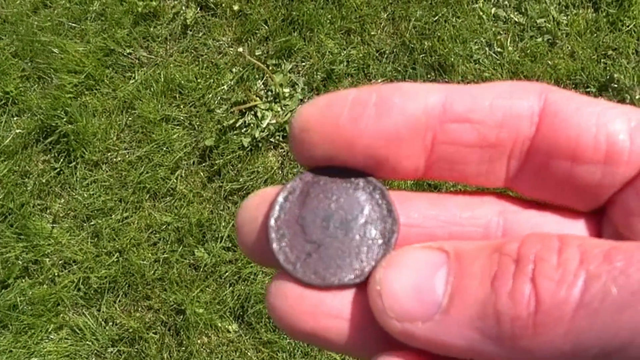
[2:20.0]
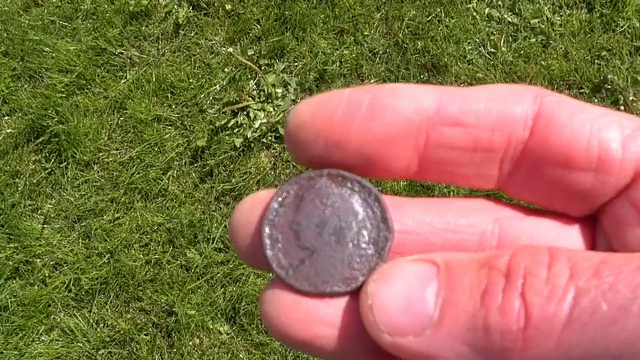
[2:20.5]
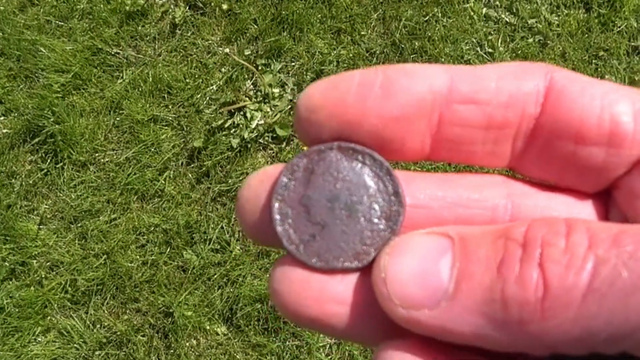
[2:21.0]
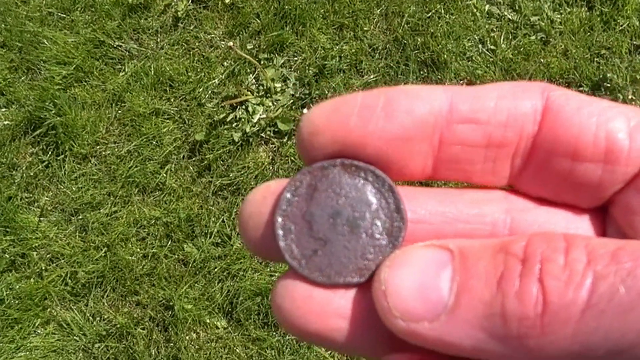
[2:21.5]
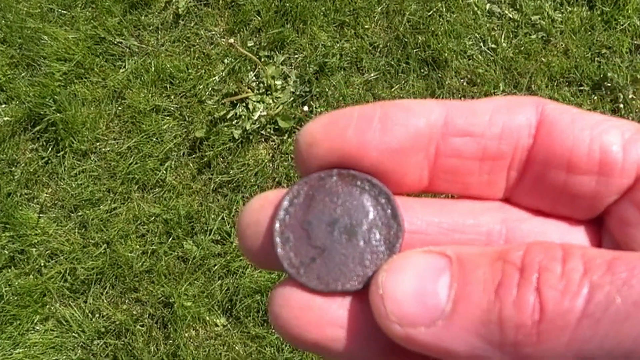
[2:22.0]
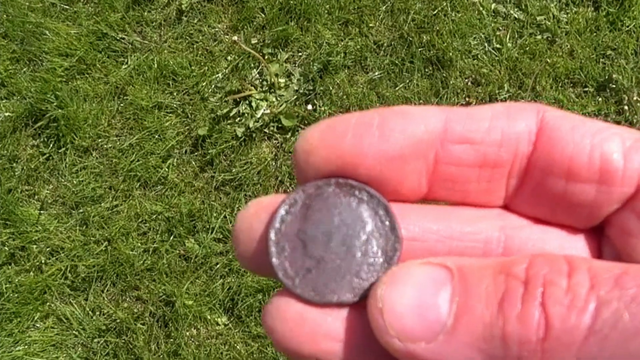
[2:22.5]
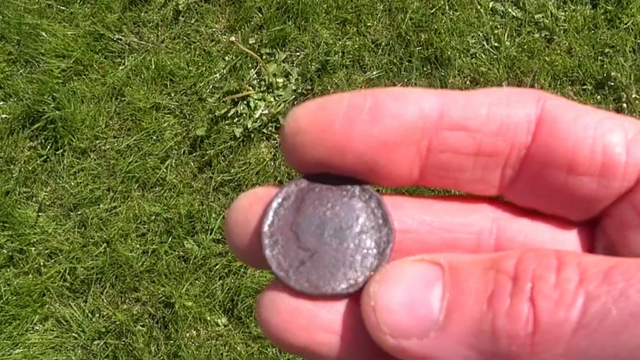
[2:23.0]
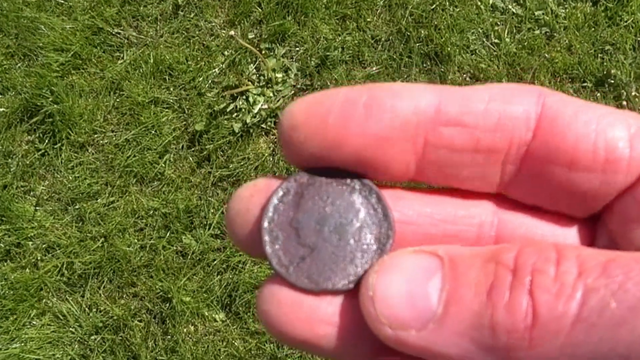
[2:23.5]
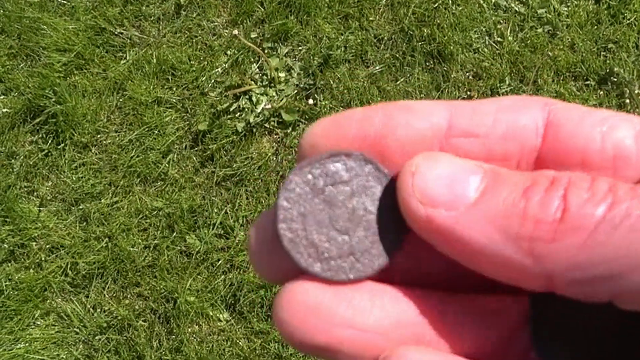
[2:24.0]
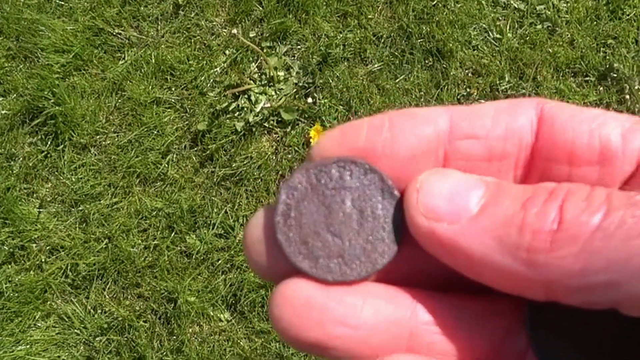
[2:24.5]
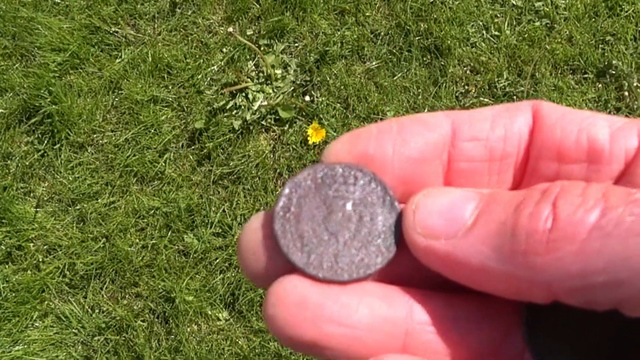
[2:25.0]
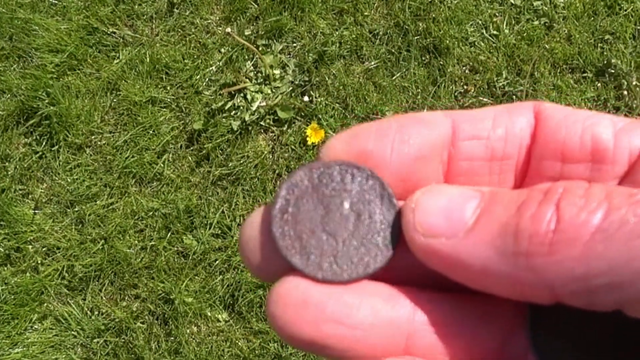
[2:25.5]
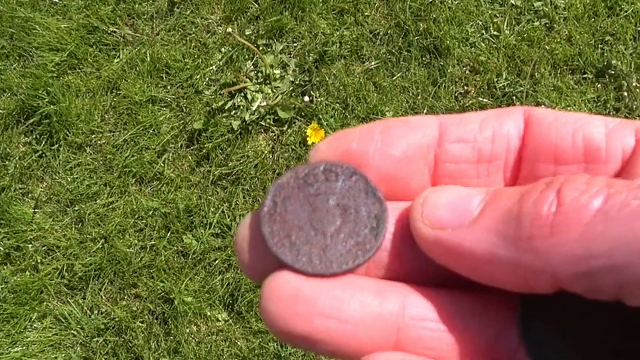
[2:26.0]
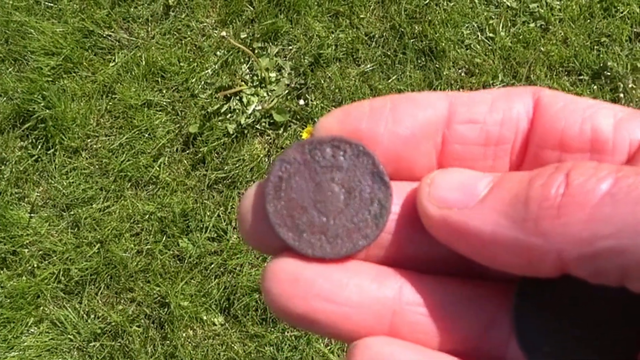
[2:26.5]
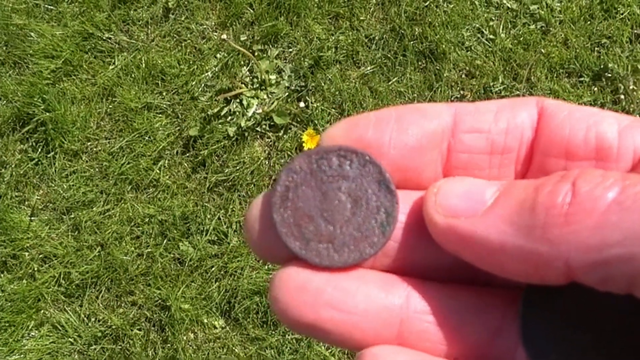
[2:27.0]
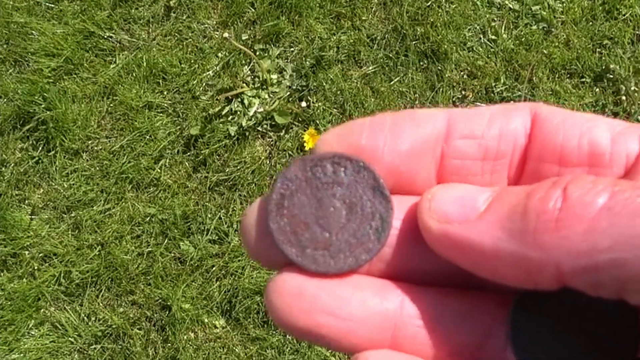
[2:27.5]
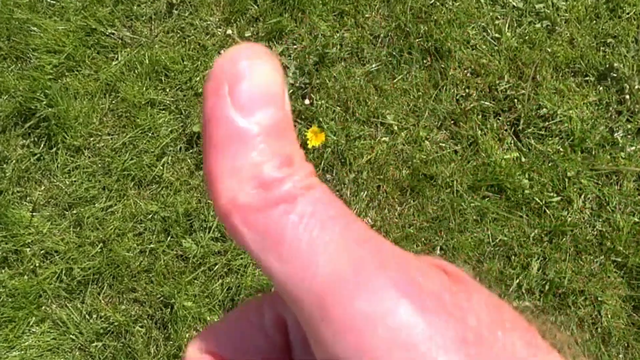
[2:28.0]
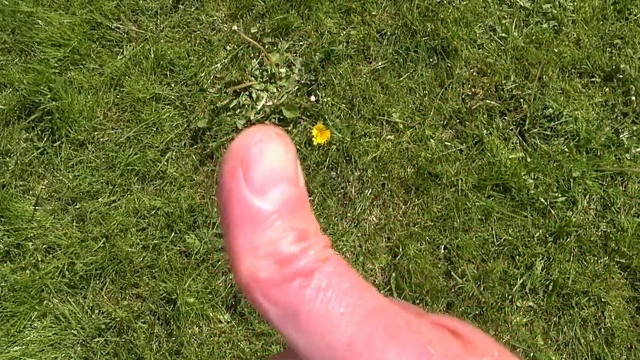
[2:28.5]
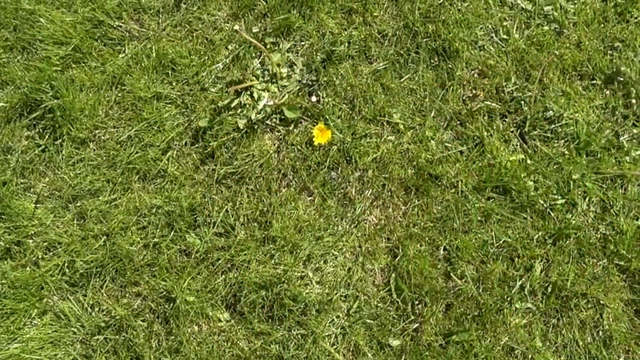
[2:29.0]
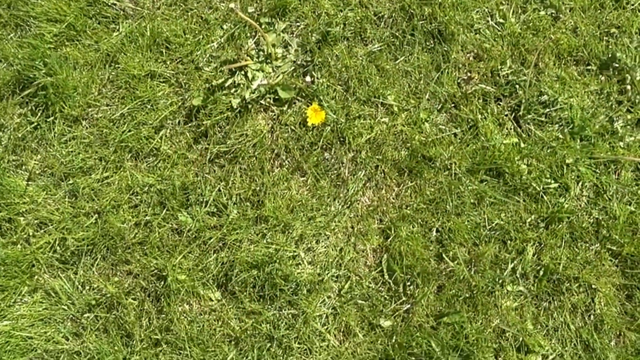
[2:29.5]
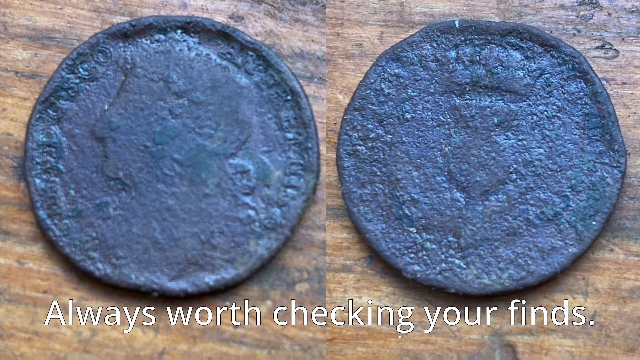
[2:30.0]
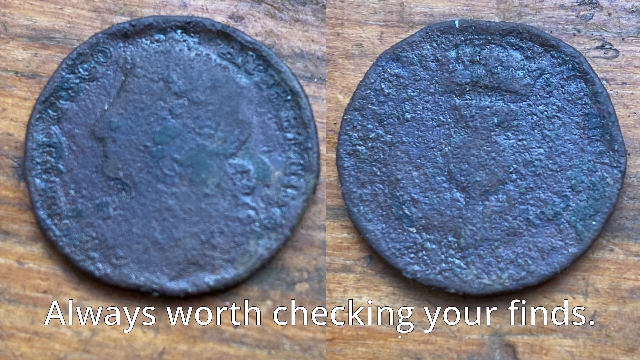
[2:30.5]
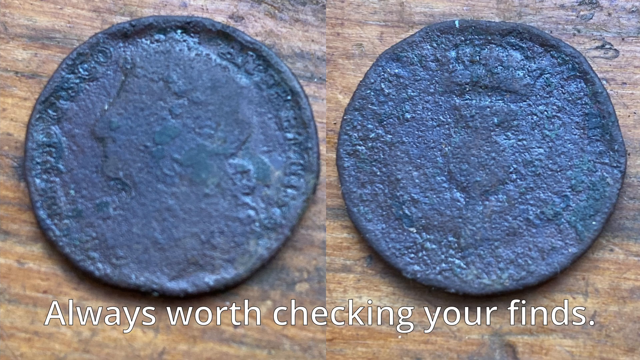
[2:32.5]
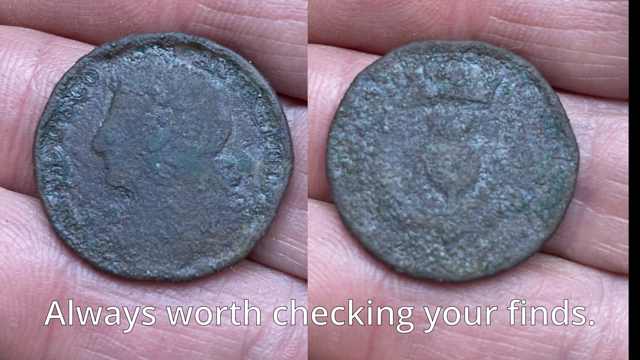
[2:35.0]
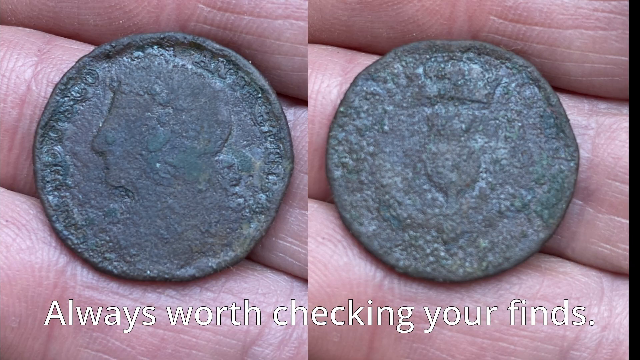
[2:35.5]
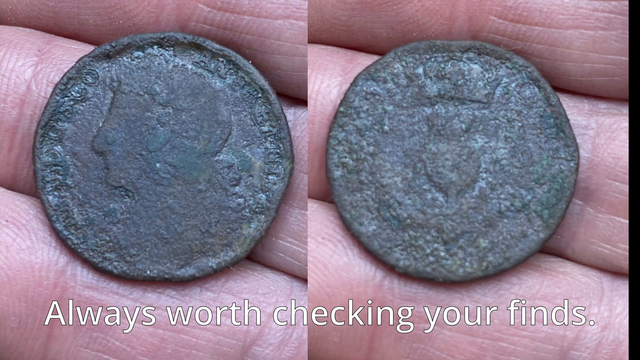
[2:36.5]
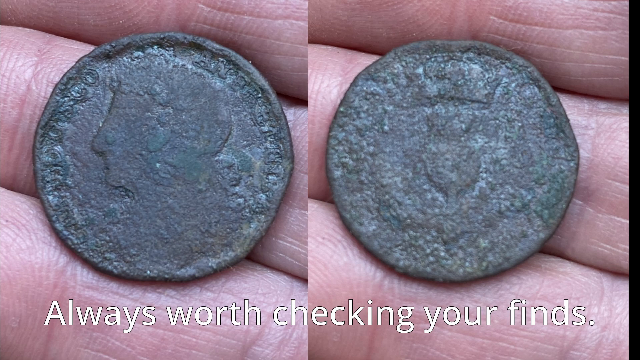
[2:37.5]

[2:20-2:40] The hand, still coming in from the right, shows the first coin with the royal head and flips it over to the side with the thistle. He then gives a thumbs up; the thumb is out of focus and the dandelion is in focus in the middle of the frame. The video cuts to a split screen of the first coin showing its front and back, with a graphic at the bottom reading "always worth checking your finds". The side with the face and writing around the edge is on the left, and the side with the thistle is on the right. The coin is basically round but somewhat deformed and extremely corroded. The photos are taken on a quite bright wooden surface. Then the same coin is shown held on the man's fingers, with the same graphic and the same split-screen layout, head on the left and thistle on the right. This is the end of the video.